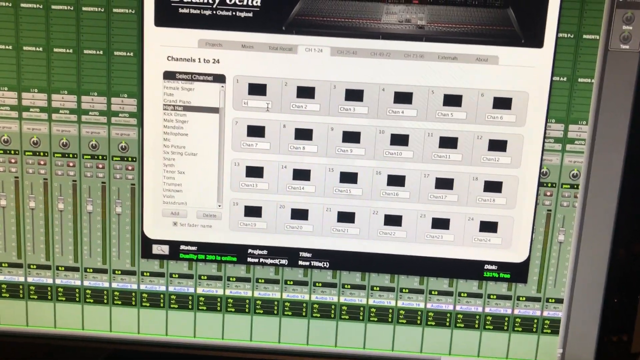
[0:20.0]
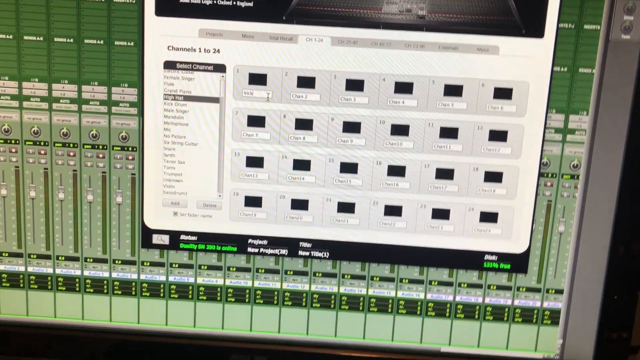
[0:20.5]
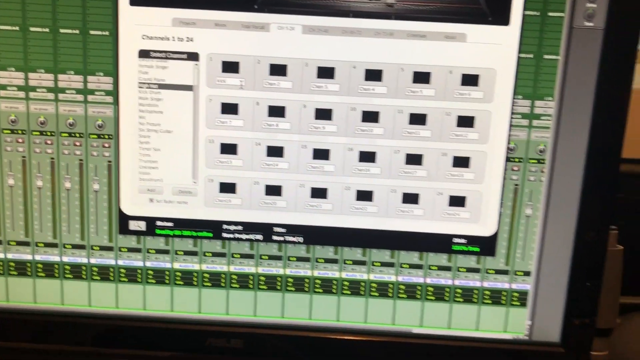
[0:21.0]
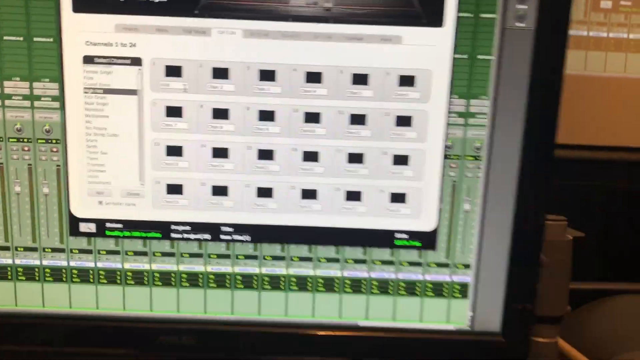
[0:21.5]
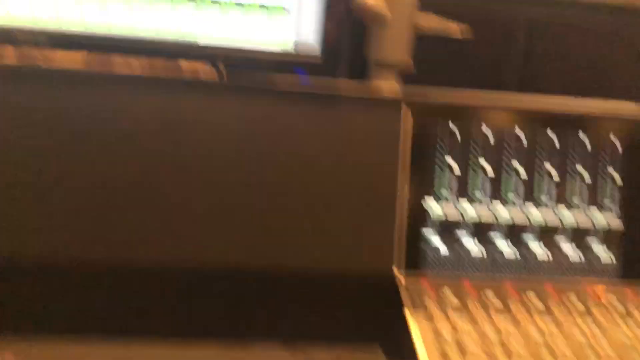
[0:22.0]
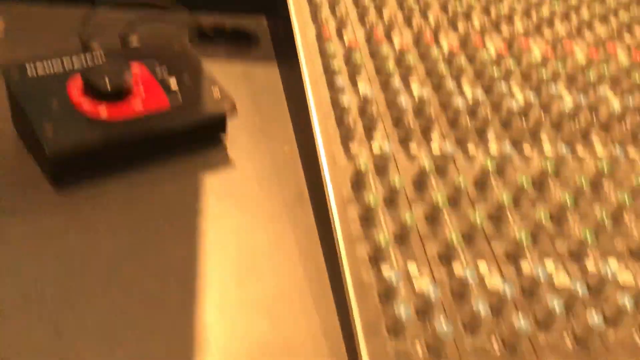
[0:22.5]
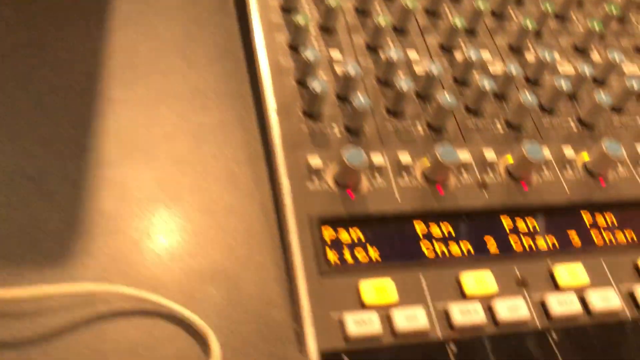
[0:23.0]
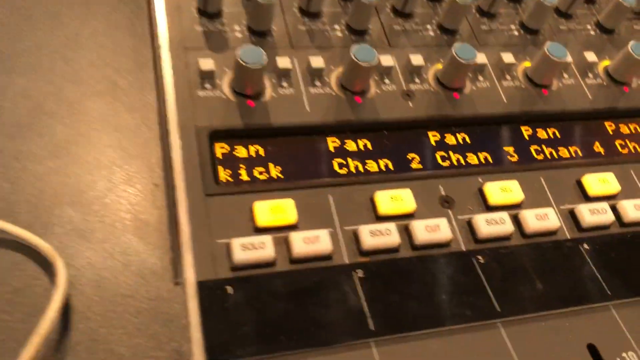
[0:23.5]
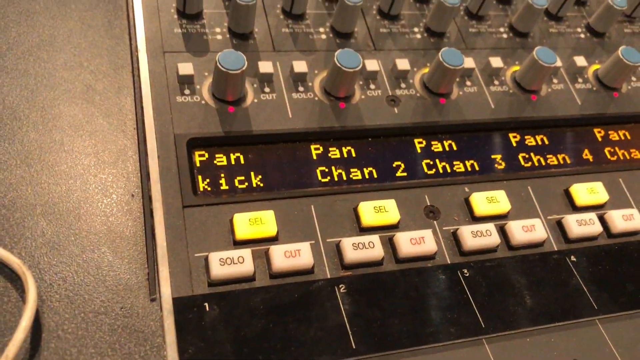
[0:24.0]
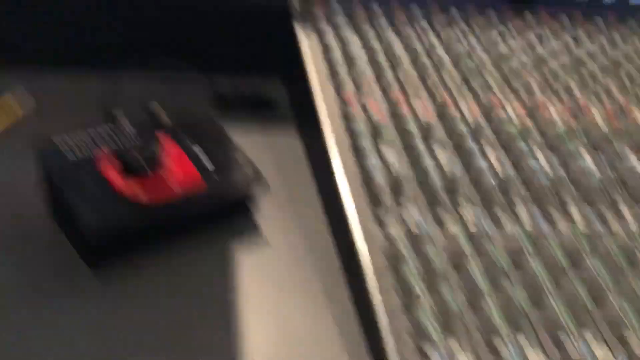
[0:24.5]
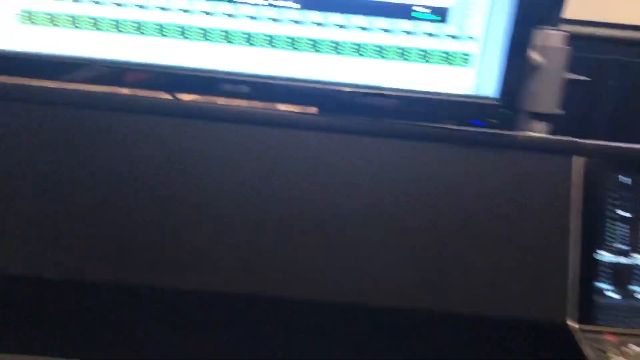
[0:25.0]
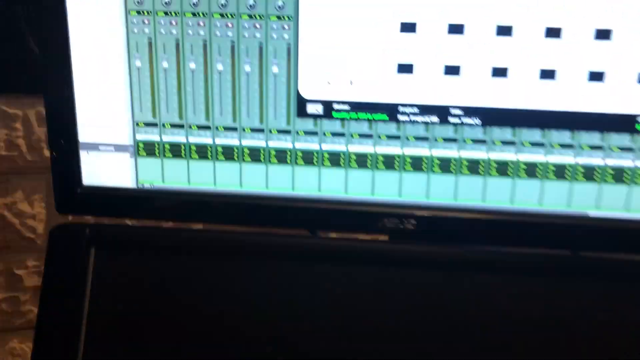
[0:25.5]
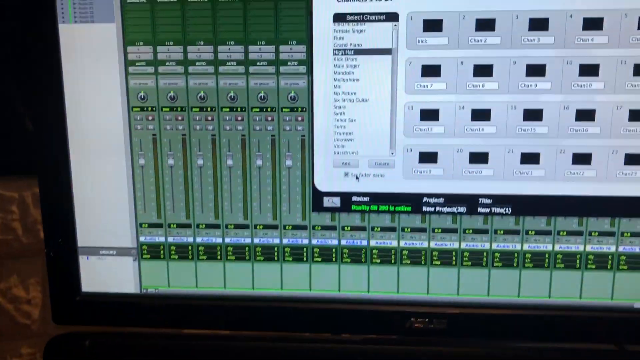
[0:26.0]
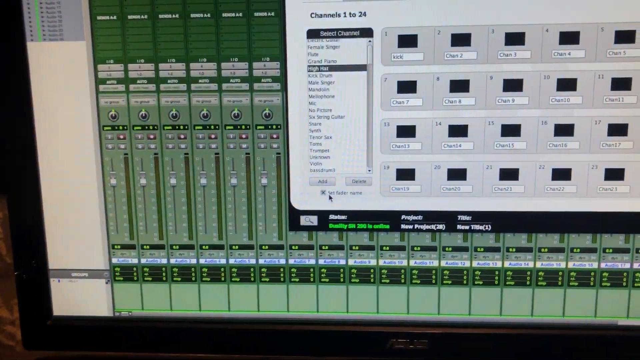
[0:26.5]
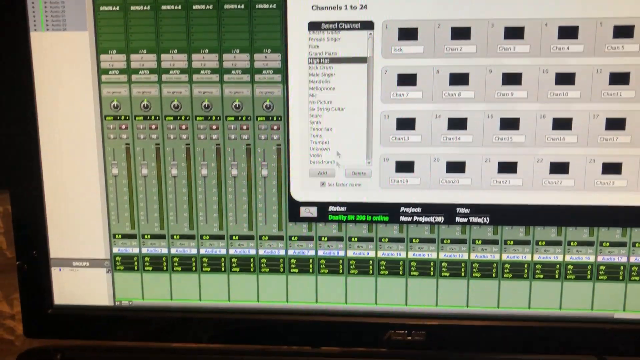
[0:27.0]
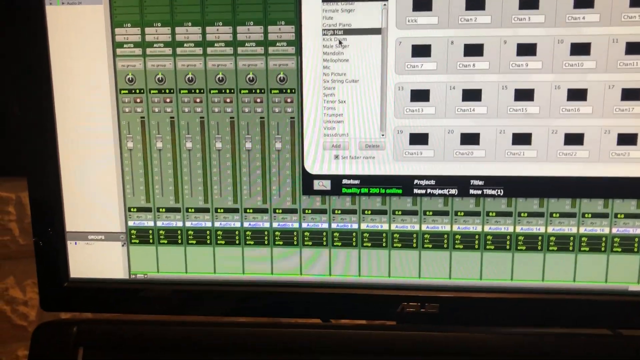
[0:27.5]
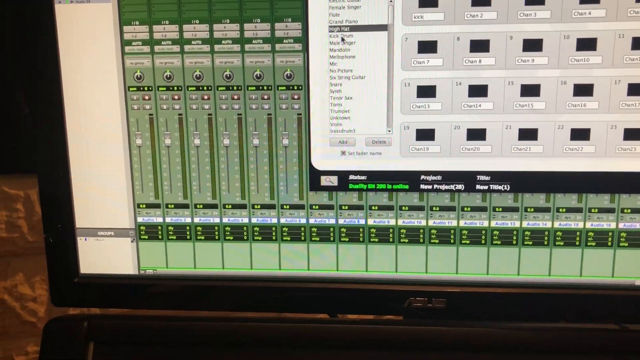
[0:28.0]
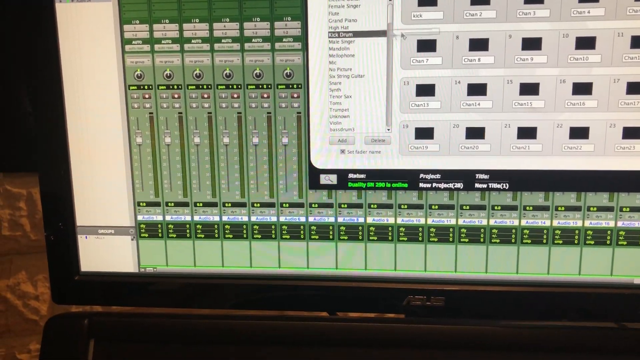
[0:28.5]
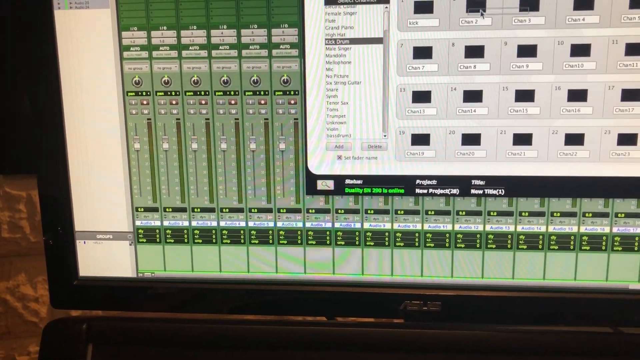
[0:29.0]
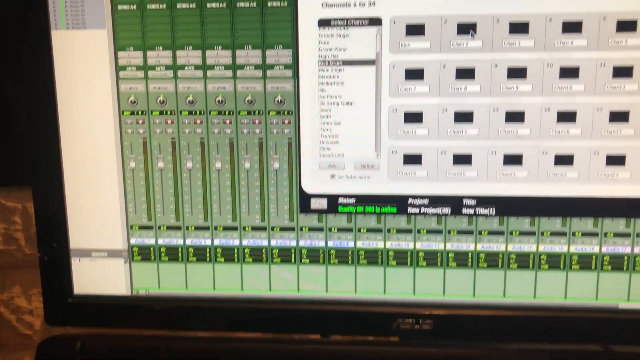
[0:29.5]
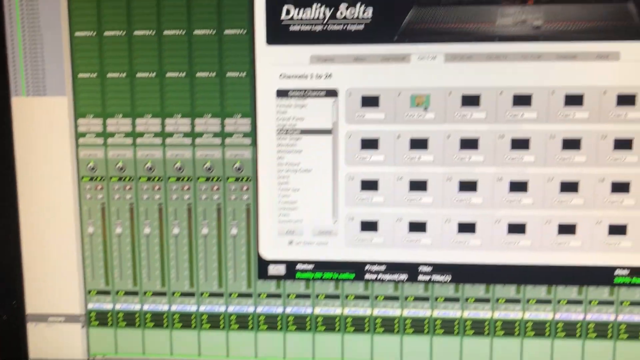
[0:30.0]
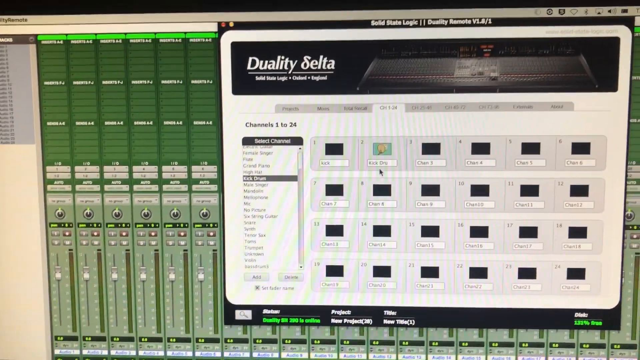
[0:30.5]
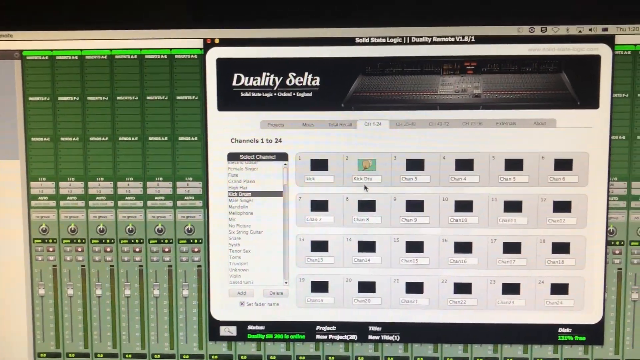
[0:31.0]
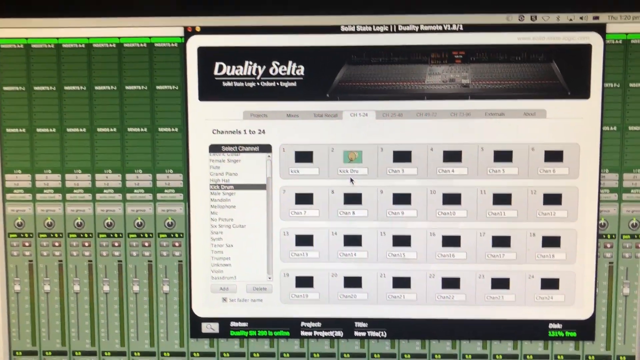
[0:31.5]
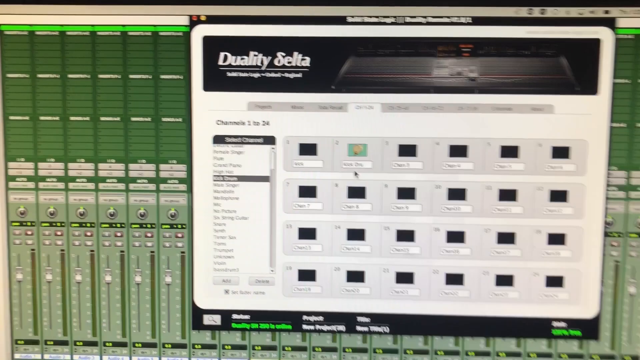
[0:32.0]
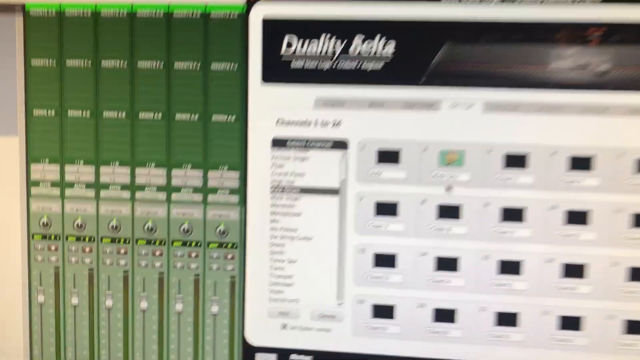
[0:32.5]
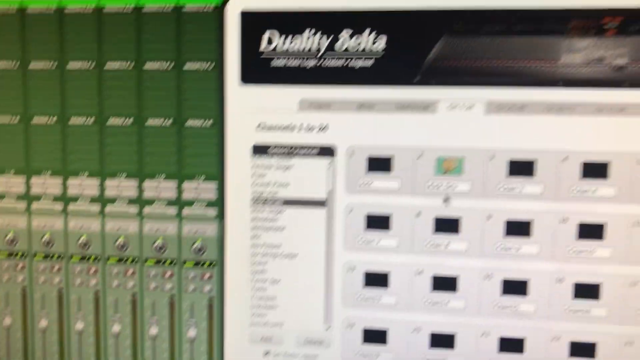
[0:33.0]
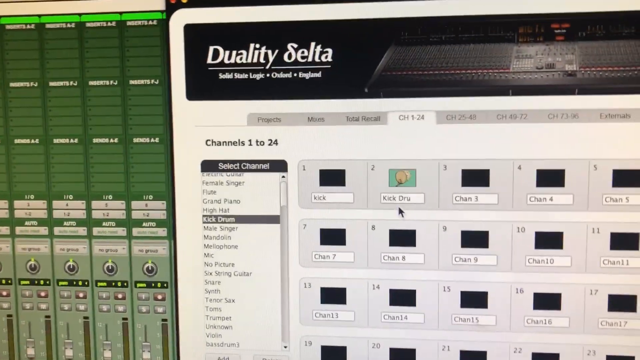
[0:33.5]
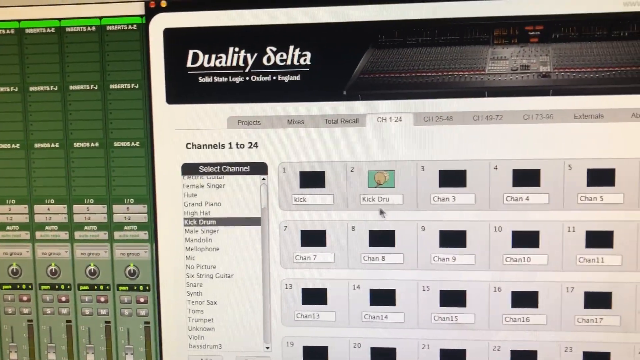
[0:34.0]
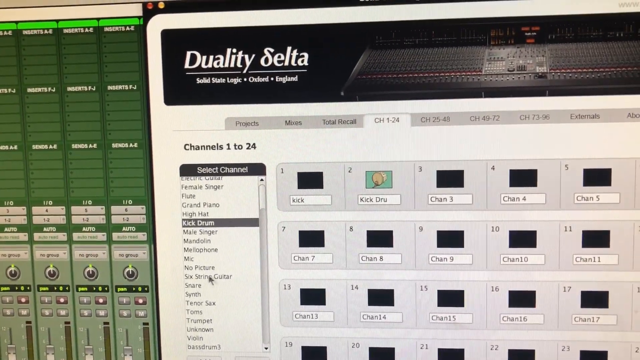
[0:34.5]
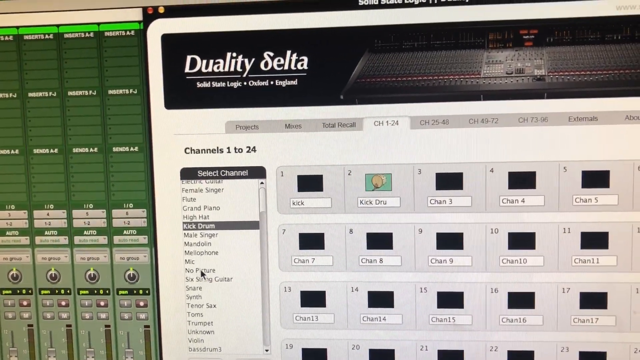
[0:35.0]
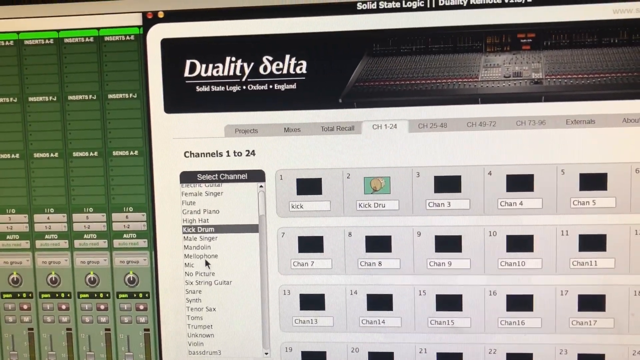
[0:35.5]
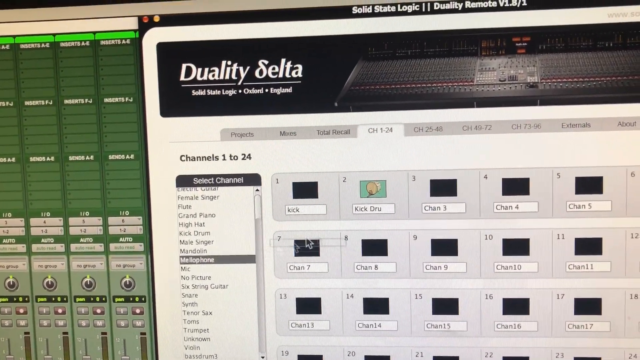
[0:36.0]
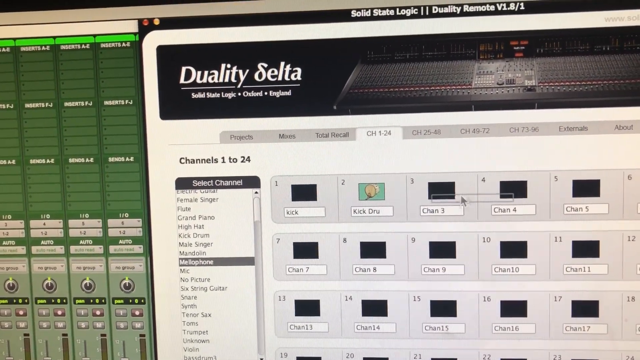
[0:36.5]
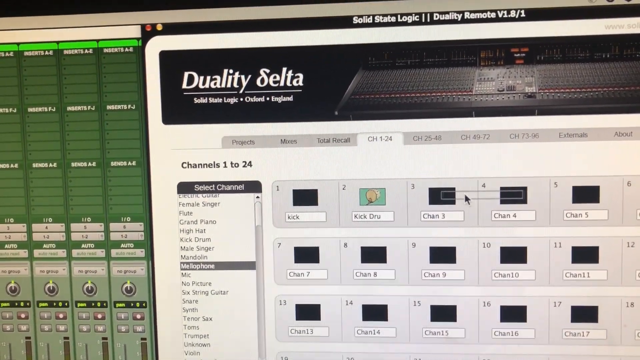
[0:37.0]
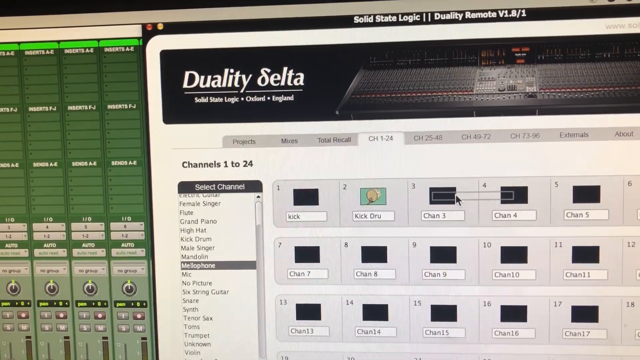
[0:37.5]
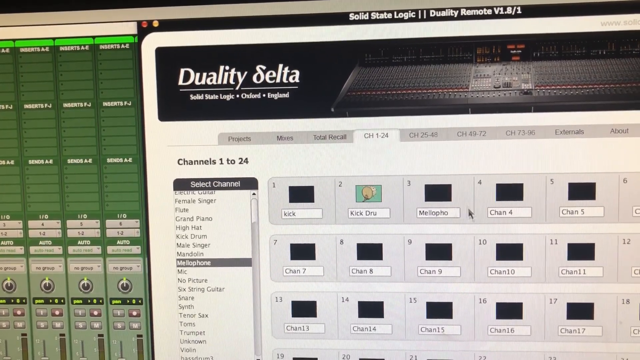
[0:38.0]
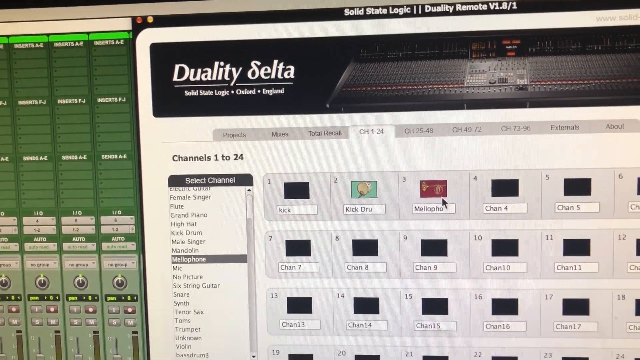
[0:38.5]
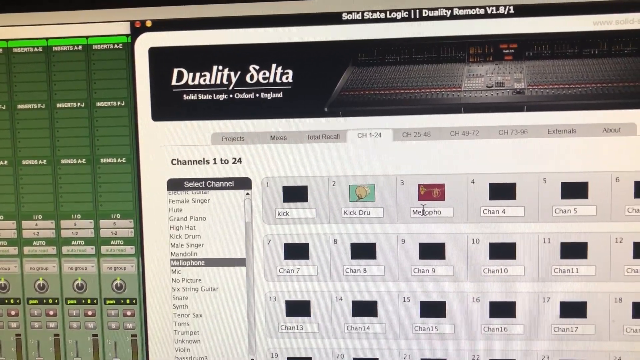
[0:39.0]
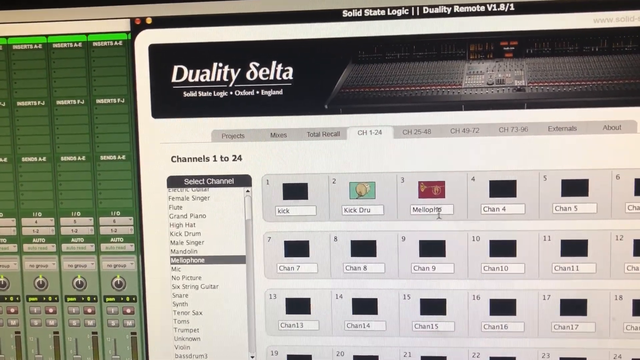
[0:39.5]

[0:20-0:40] The monitor appears to show a website, and it says "channels 1 to 24"; the computer monitor may be hooked up to the sound machine. Underneath on the left side is text that apparently says "overview". There is a slider button for moving up and down a list, and each component of the list is highlighted in black as it is reached. There appear to be add and delete buttons underneath. To the right, apparently labeled 1 through 6 and 7 through 12, are black boxes, three per row with four rows visible, and a text field underneath each box where text can be typed. The hands move away and the view goes back down to the instrument panel, looking at the pan channel for a second. Someone then clicks and drags one of the list items, and the second box goes from black to a greenish color. It says "kick drw", maybe kick drum, and shows a blue box with almost a brownish circle in it, maybe the drum. Then mellophone is clicked, and while it is dragged a dotted border box can kind of be seen; as soon as it is placed, the third box goes from black to kind of a red box.